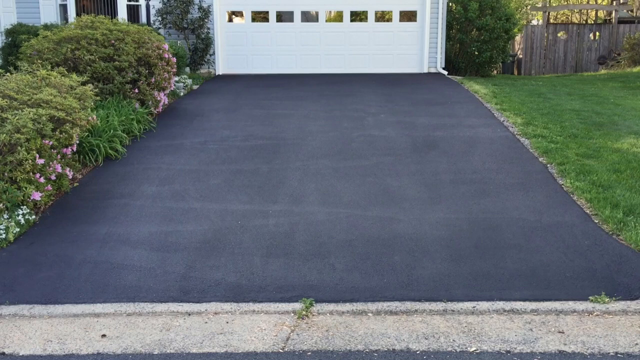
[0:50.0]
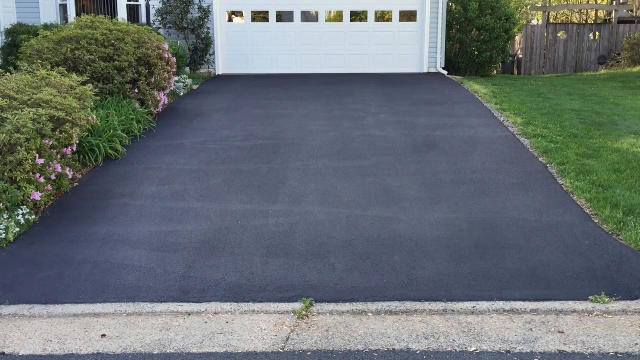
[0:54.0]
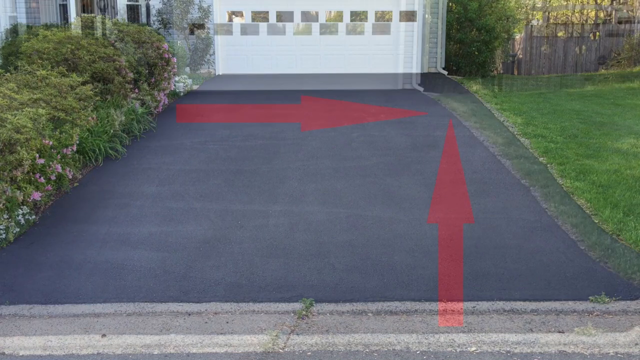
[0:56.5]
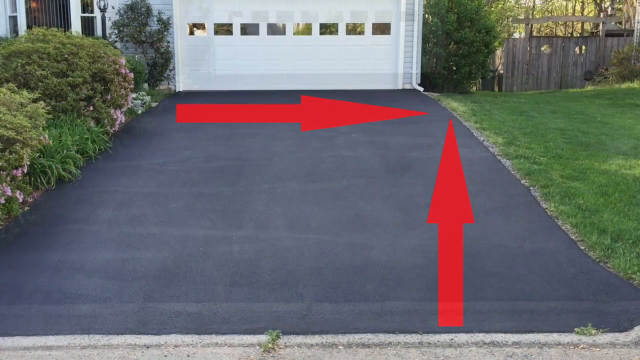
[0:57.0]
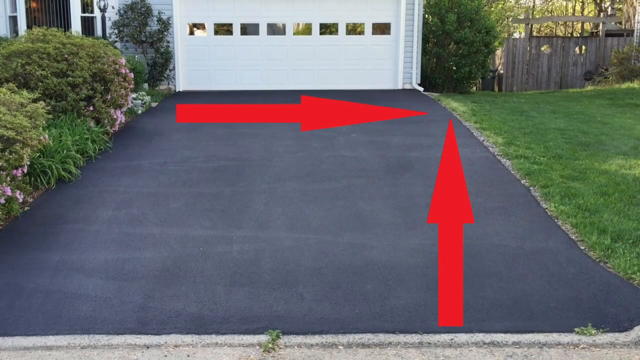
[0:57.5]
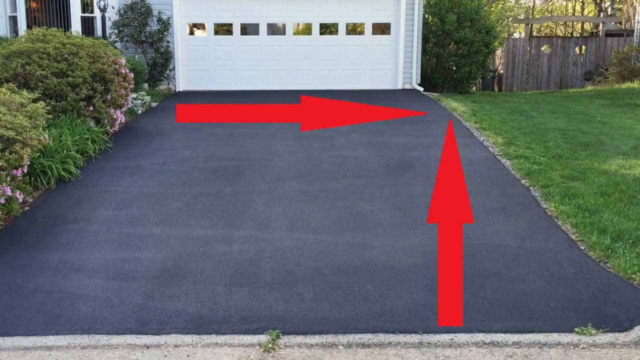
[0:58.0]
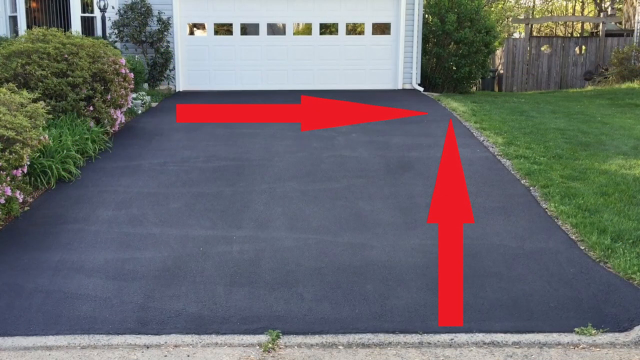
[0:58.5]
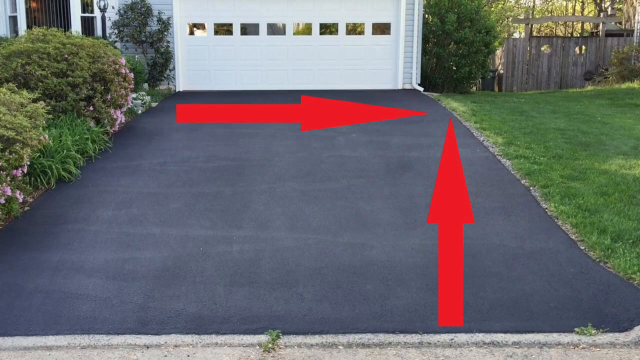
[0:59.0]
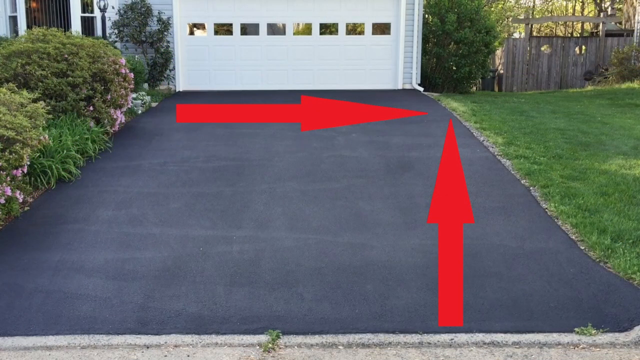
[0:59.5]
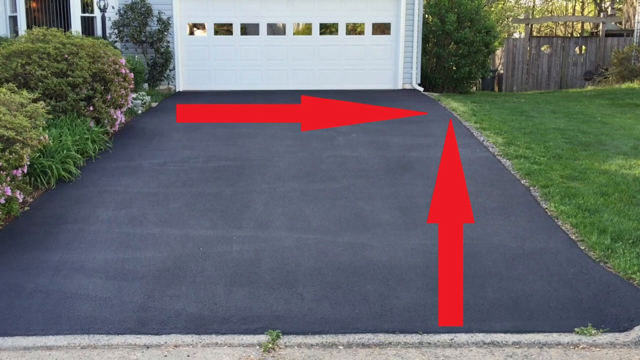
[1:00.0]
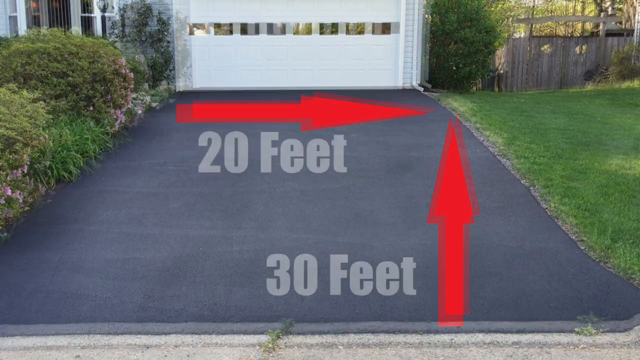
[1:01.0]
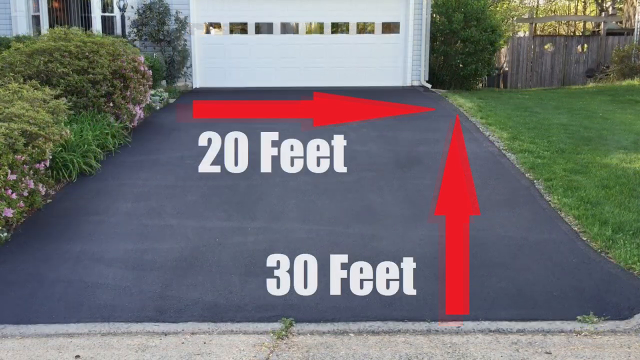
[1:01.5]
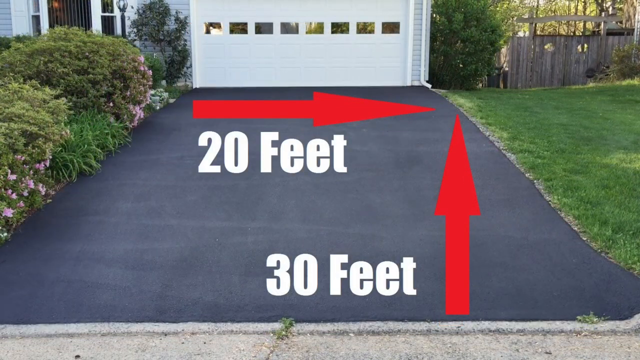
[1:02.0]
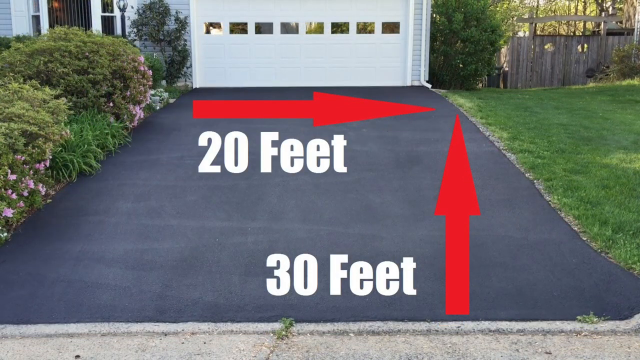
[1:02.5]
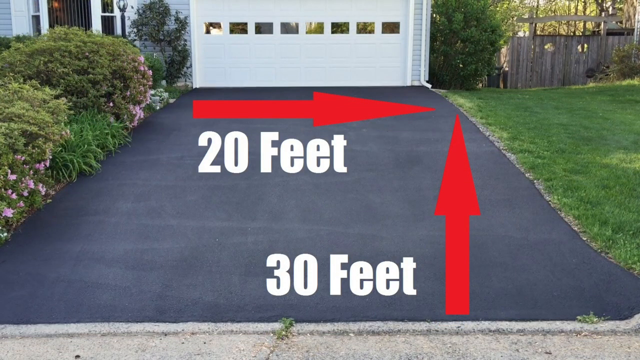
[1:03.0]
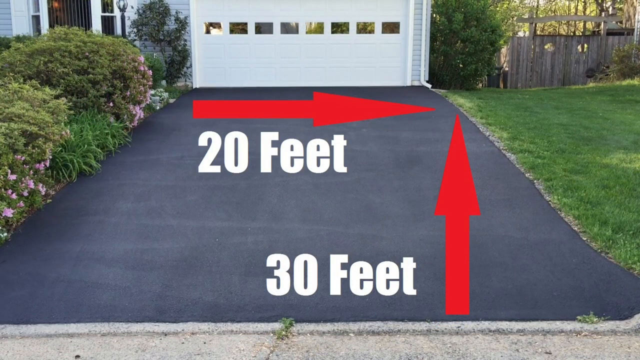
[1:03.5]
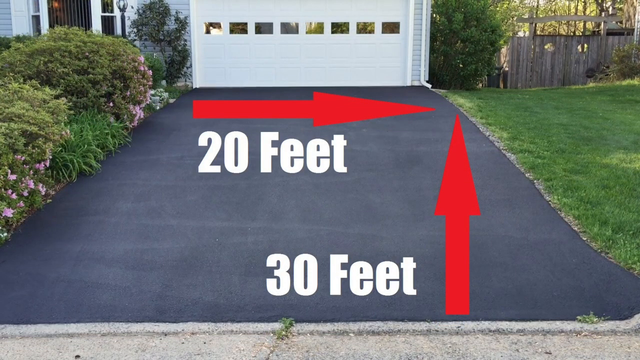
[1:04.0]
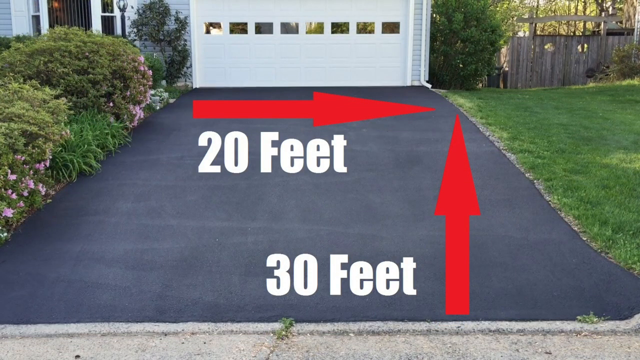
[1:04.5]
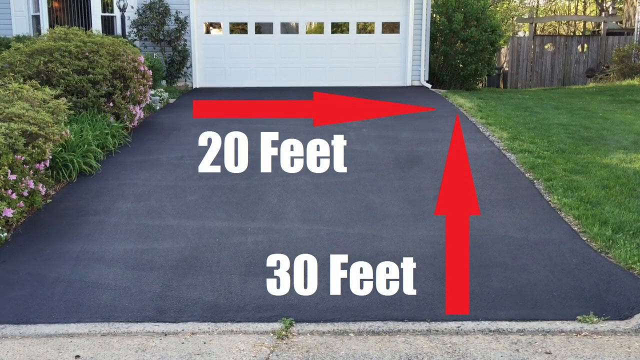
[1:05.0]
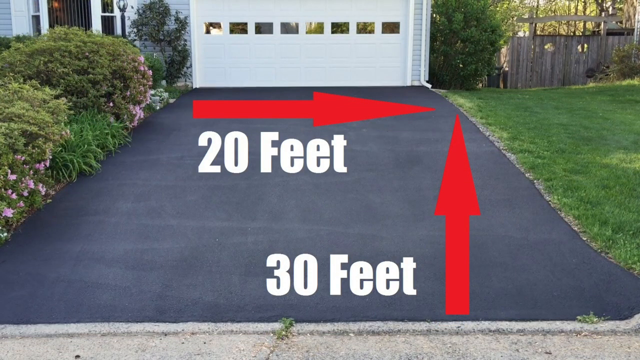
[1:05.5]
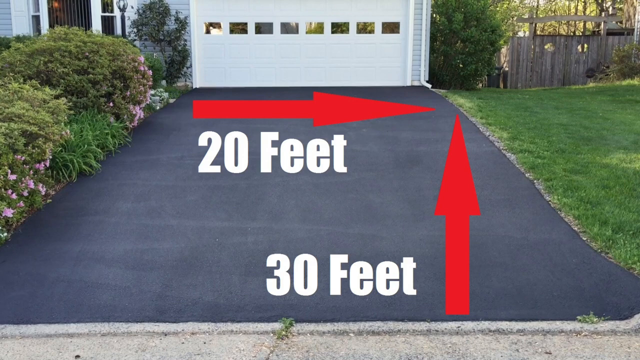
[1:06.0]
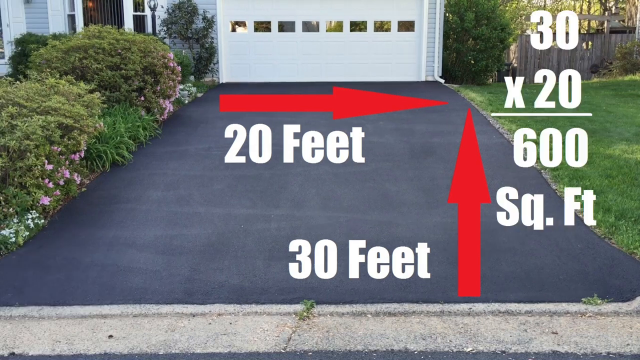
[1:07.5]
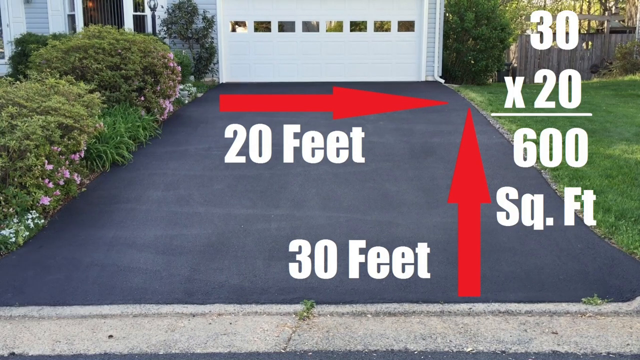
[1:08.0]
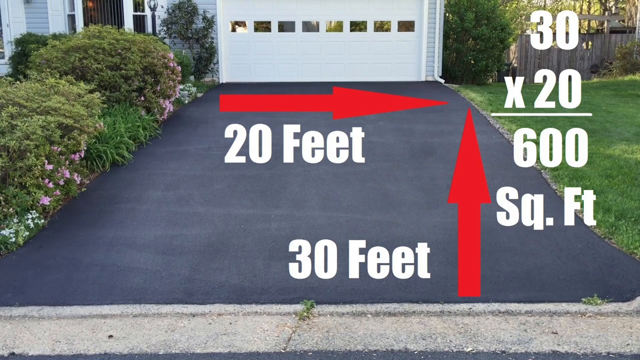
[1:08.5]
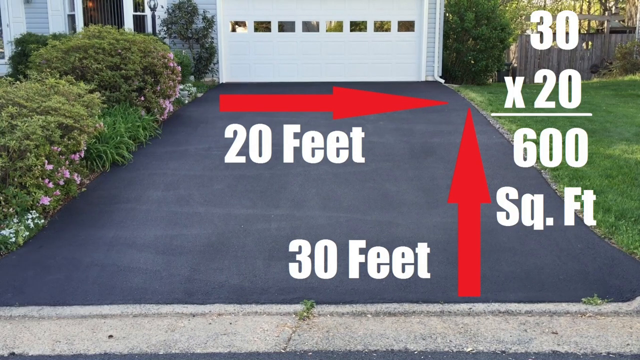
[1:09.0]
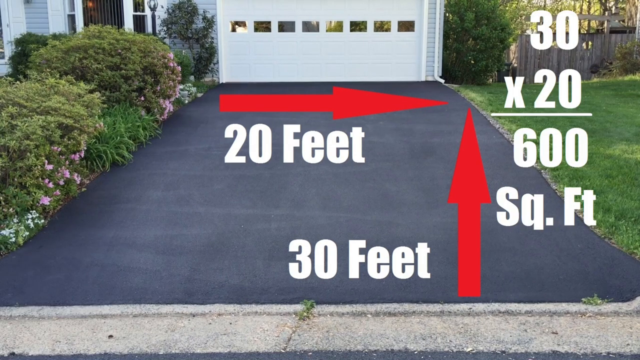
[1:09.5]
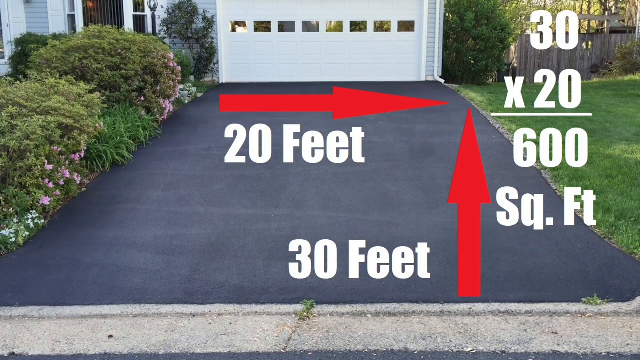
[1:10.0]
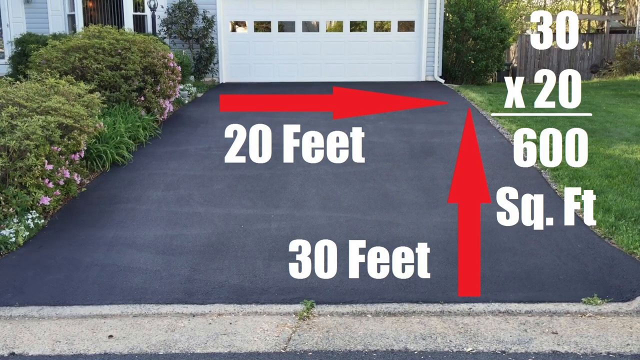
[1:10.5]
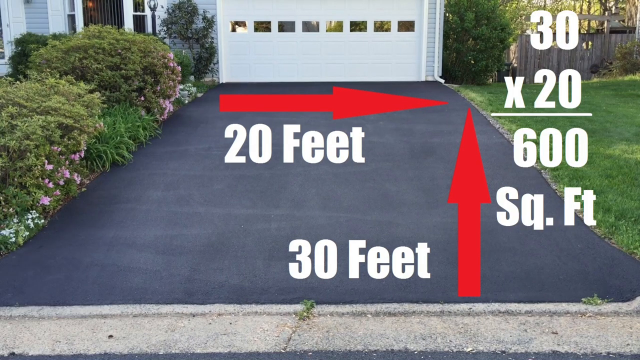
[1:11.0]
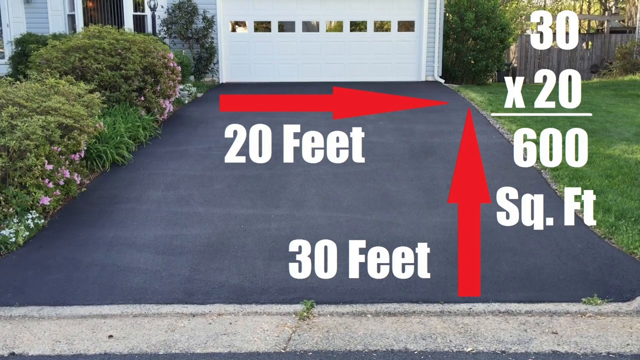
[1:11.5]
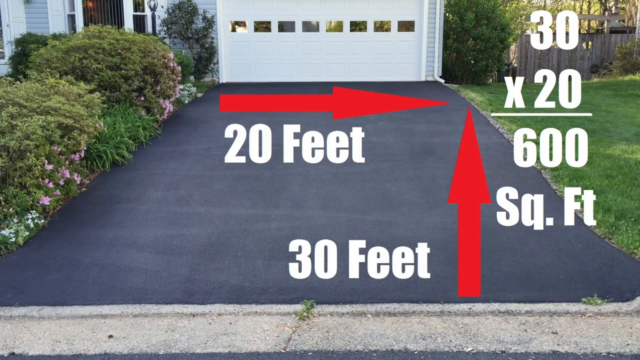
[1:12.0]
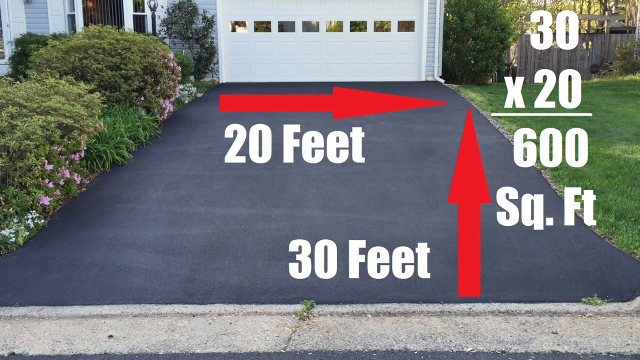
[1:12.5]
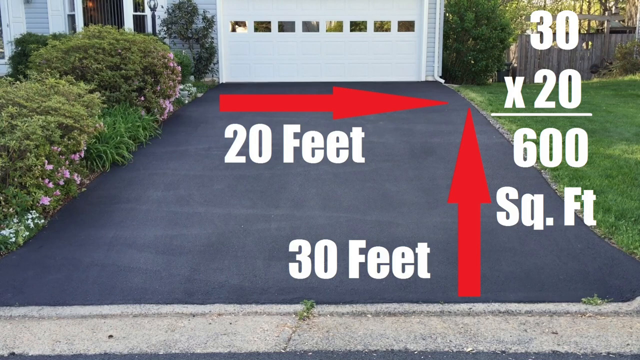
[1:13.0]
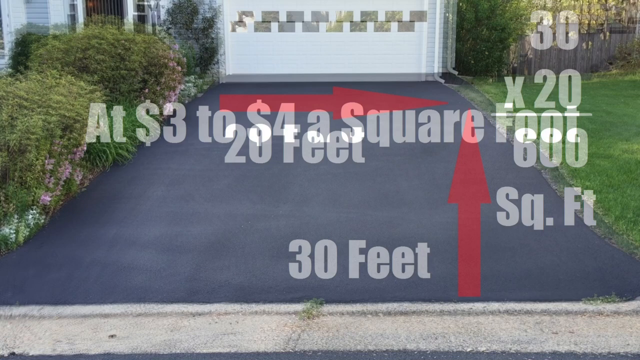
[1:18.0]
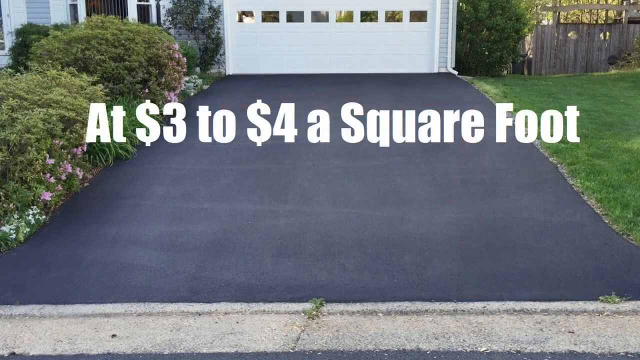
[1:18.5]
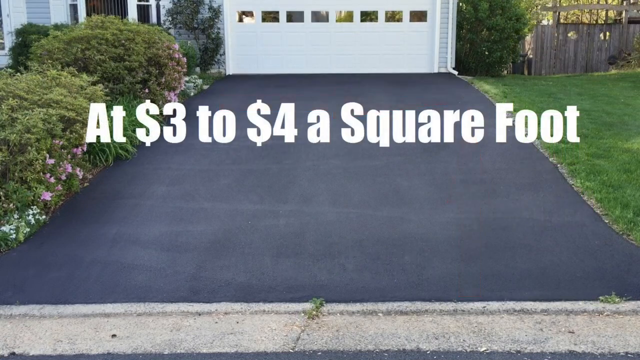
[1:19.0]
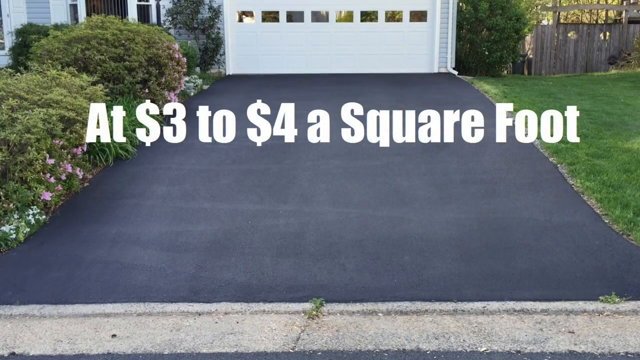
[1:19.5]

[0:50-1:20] A still image shows a man climbing; he appears to be fixing tar, as the tarred road looks old and cracked. A double-storey house is behind the man, who is putting pavement on the road inside the yard. There are green trees with white flowers, and a blue van is standing in the yard, not being driven. Two red arrows are shown on screen, one marked 20 feet and the other 30 feet, with 30 times 20 equalling 600 square feet. Amounts of three dollars and four dollars are also shown. The green grass is visible alongside the pavement.